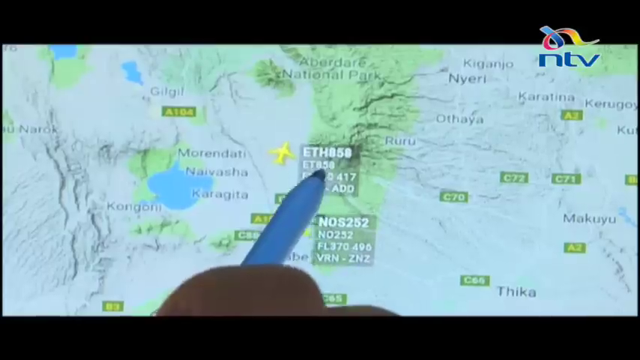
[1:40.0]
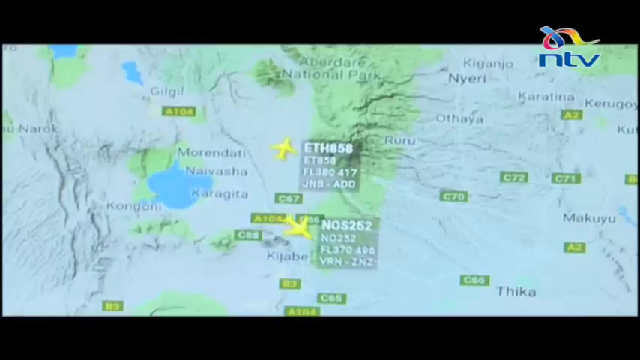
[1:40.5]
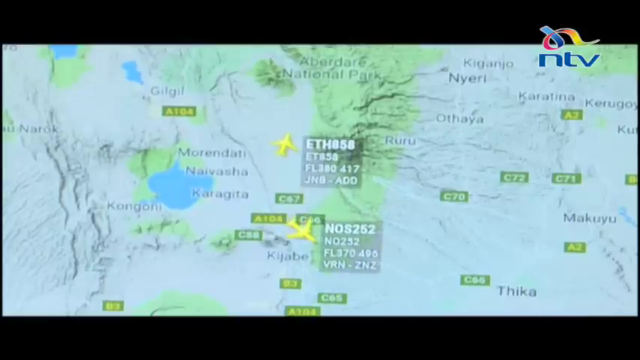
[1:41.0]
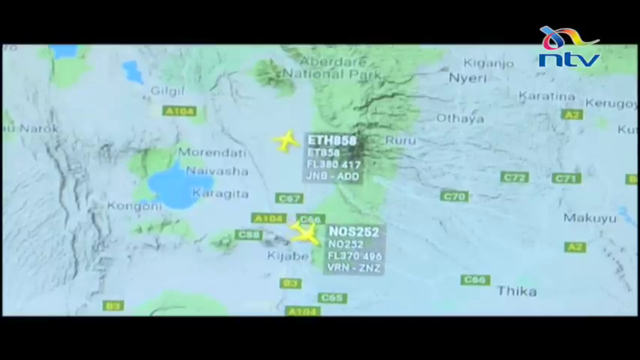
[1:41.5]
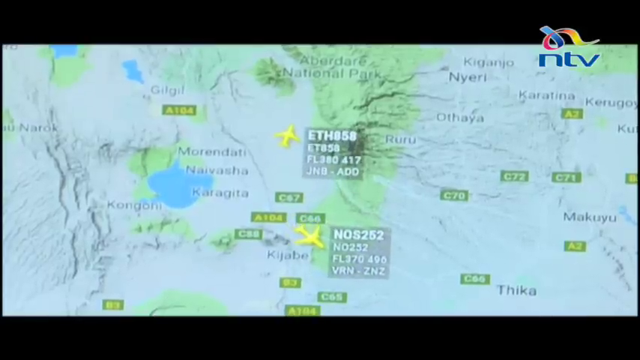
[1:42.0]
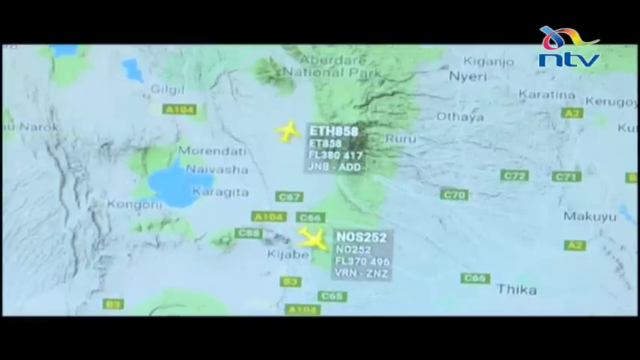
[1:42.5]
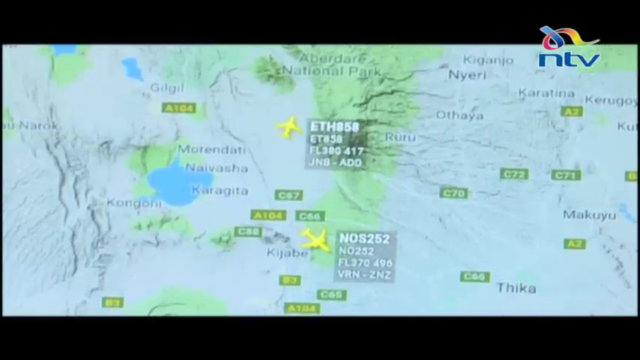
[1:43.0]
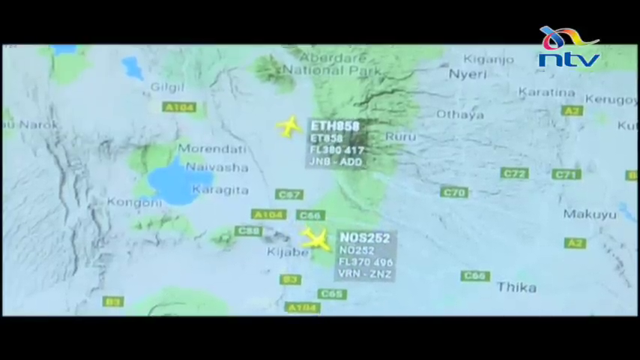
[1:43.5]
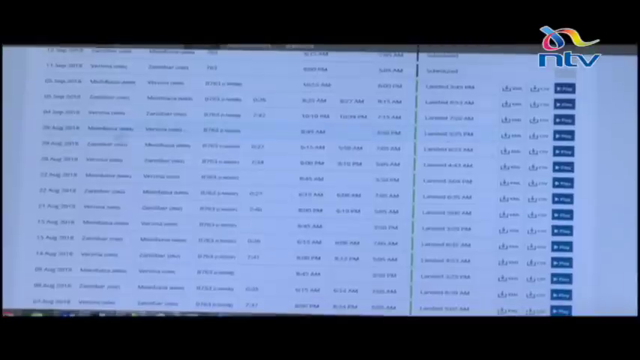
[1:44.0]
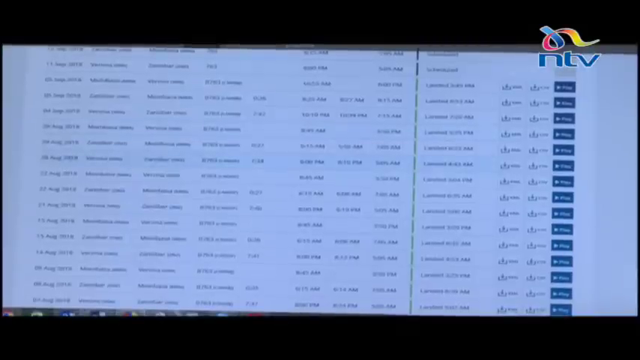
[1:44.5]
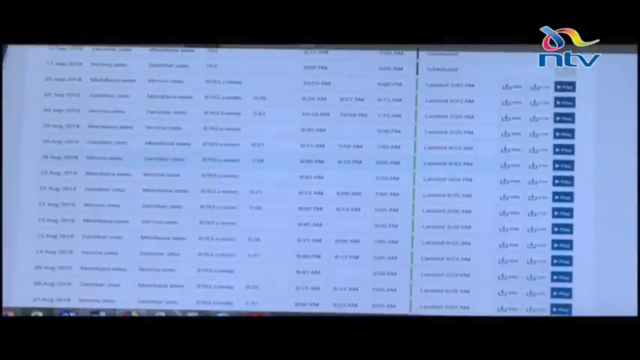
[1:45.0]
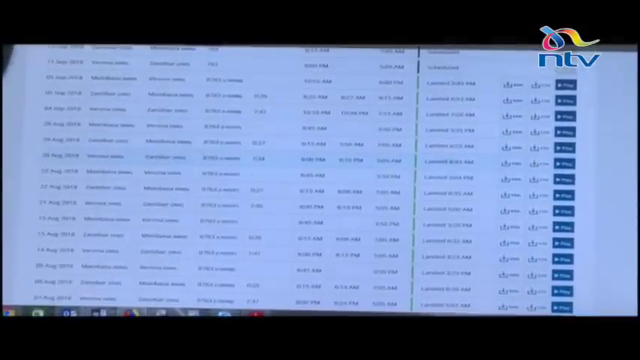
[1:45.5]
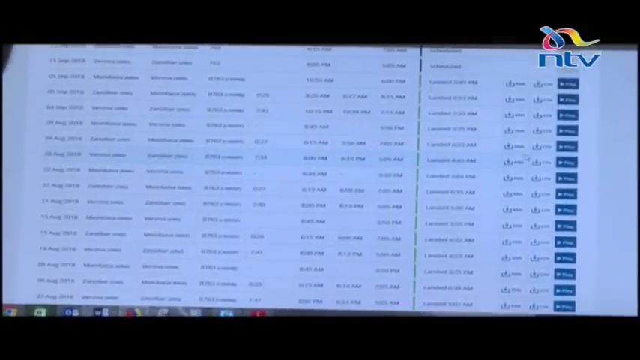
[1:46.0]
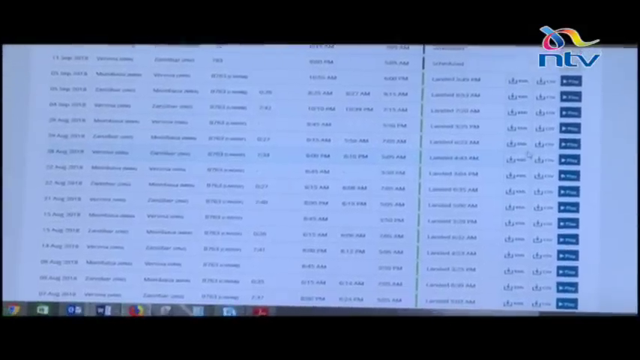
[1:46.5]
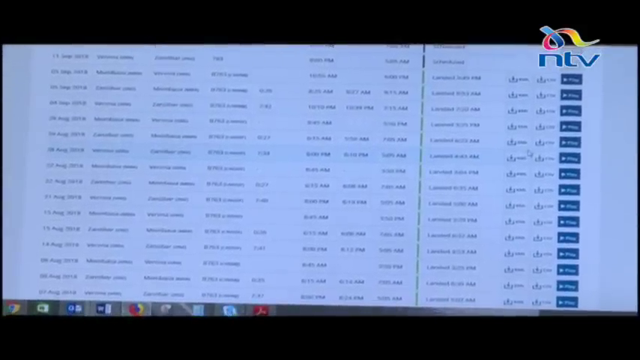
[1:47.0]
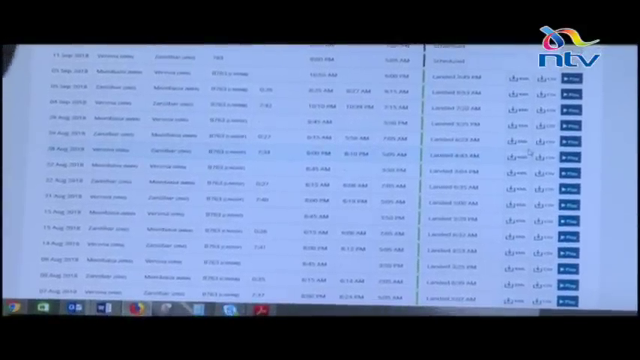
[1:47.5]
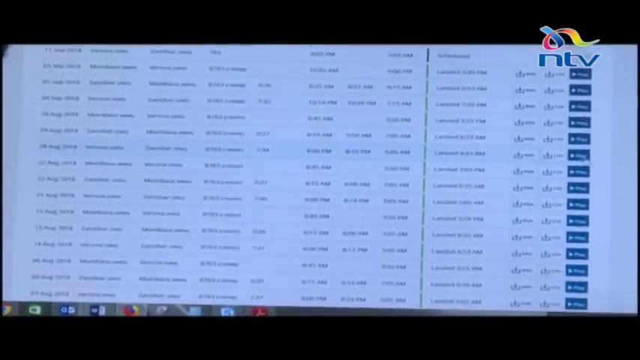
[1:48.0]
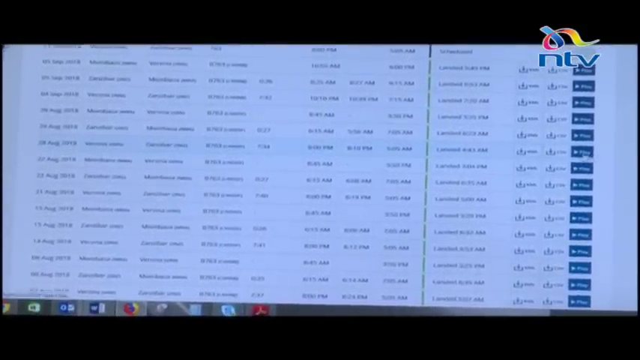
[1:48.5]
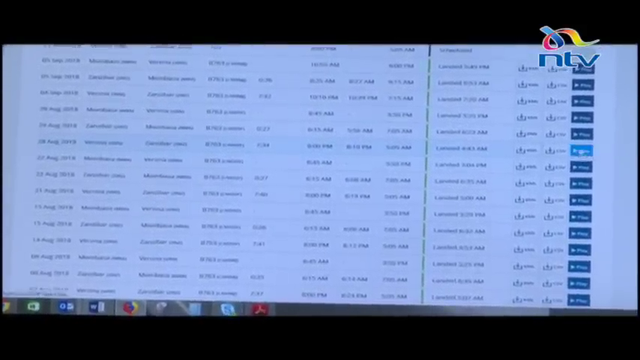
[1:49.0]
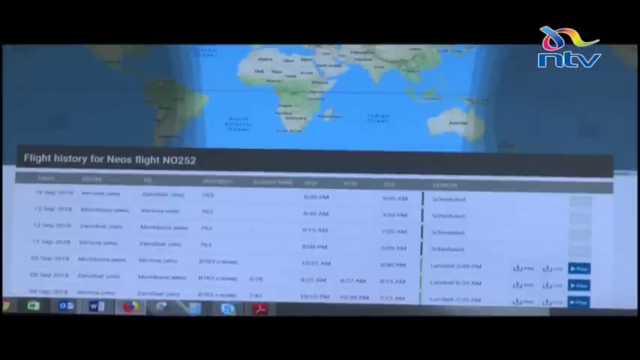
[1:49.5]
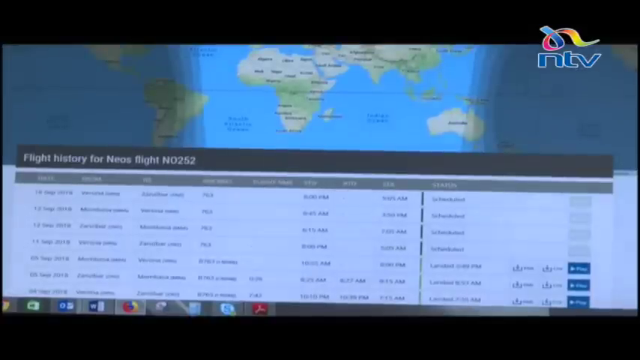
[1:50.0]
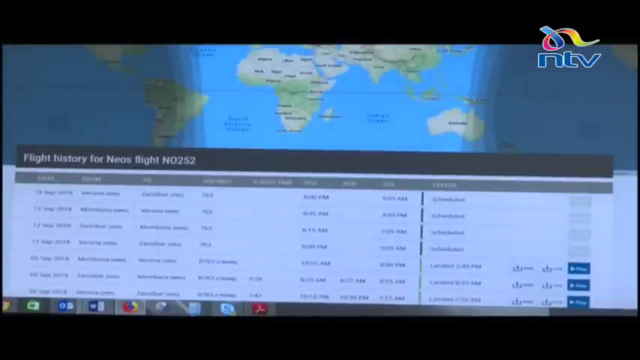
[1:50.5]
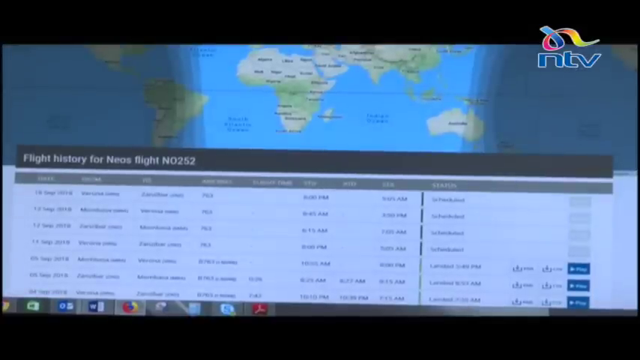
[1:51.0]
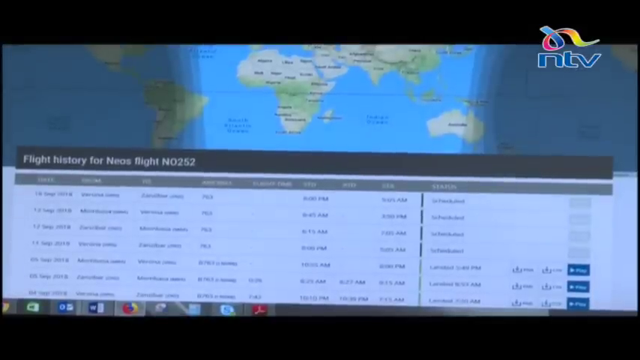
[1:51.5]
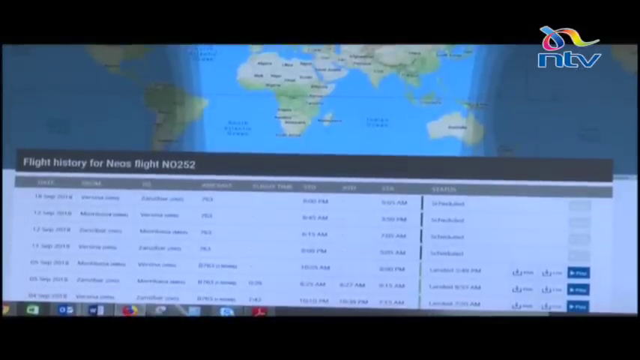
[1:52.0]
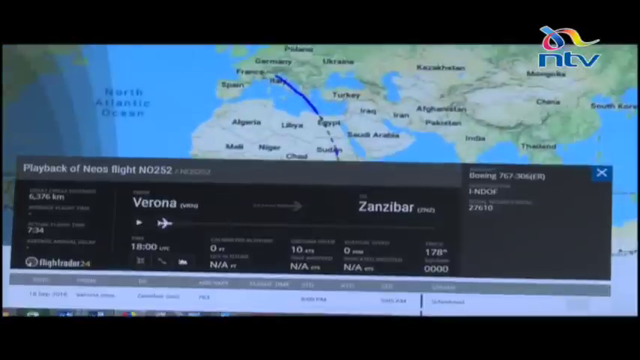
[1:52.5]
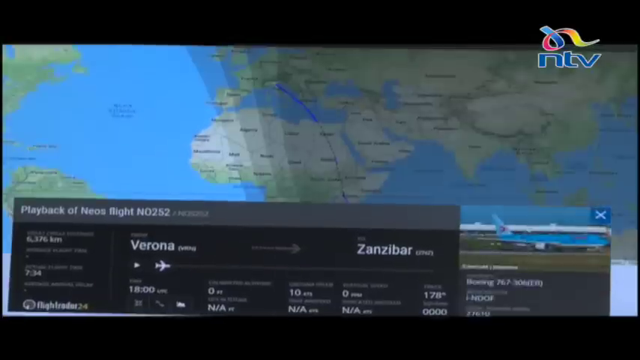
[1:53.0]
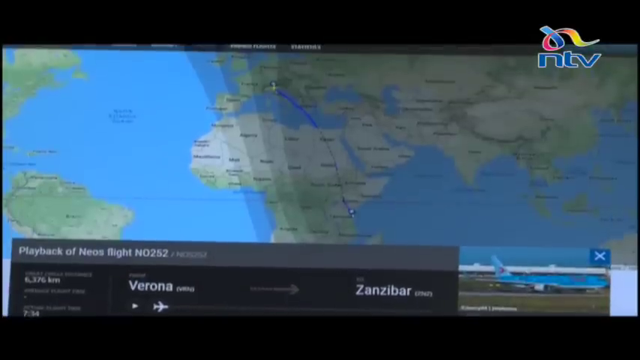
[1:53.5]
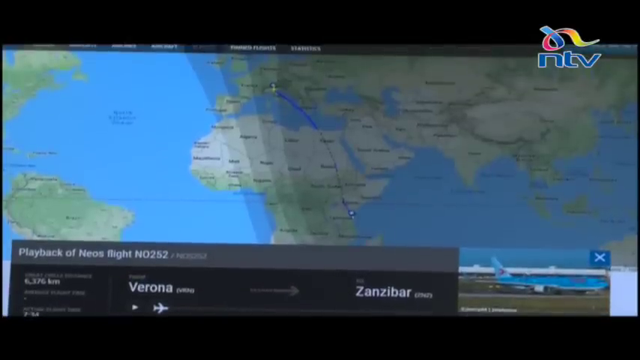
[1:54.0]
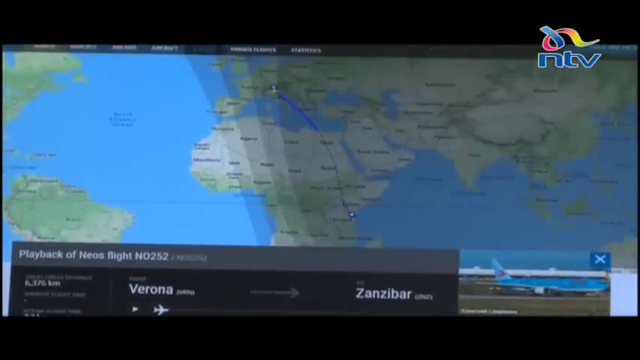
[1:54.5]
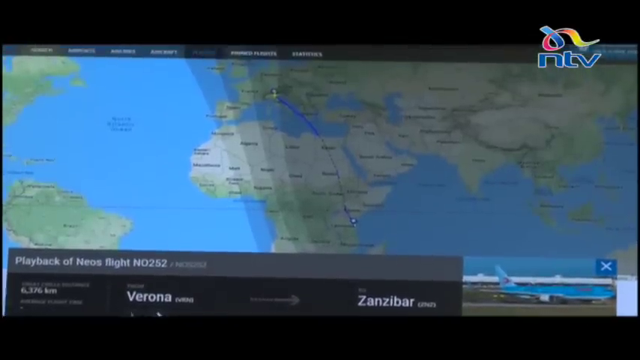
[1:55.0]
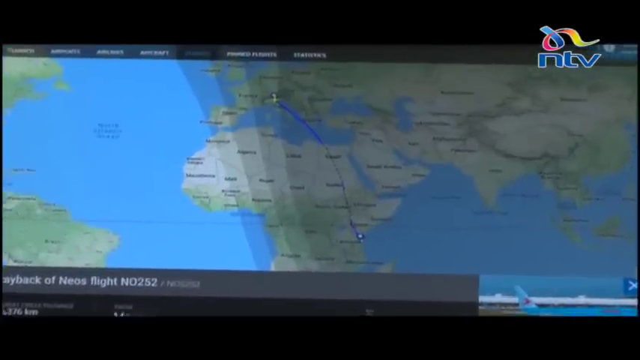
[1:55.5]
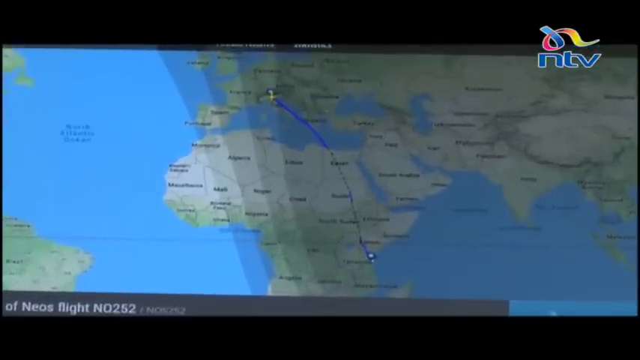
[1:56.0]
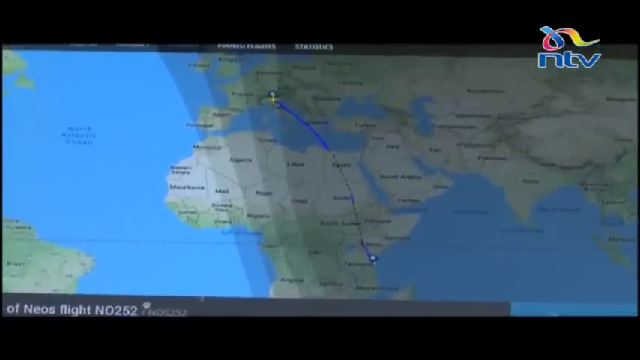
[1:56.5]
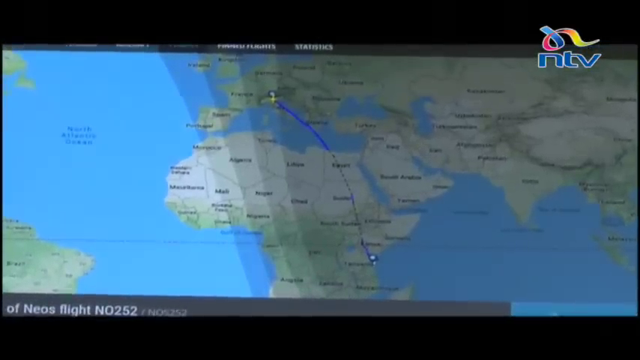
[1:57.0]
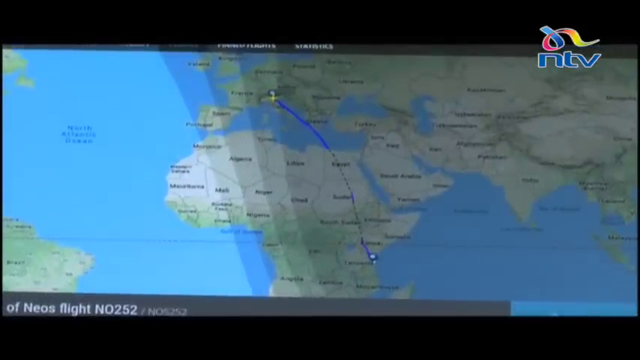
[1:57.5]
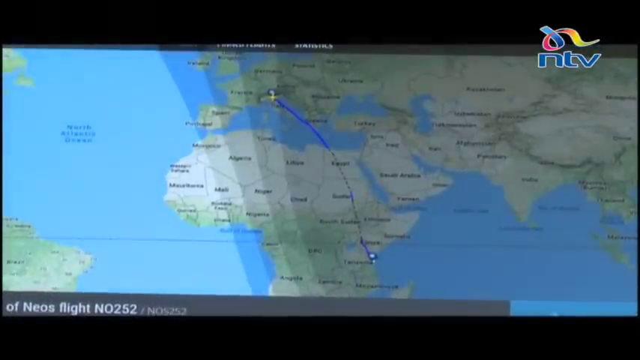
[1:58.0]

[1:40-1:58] A screen shows a map with different countries, and a person's hand points at the screen with a pen. The pen points at "ETH 858". Some words are not clearly visible, but next to them is an arrow pointing up. Another arrow appears with the word "NOS 252". The arrows appear to come from the same place and separate, the first going up and the second going down. The screen shows a lot of small words written in blue, and there is also a download sign.